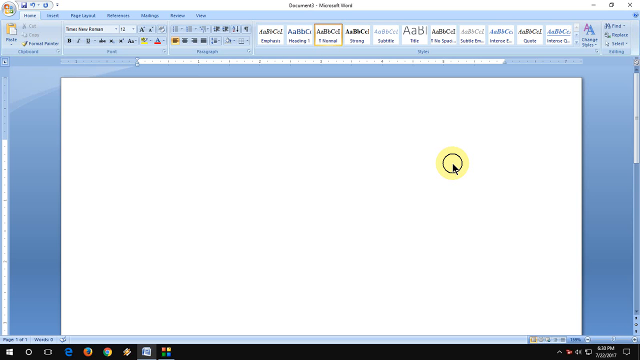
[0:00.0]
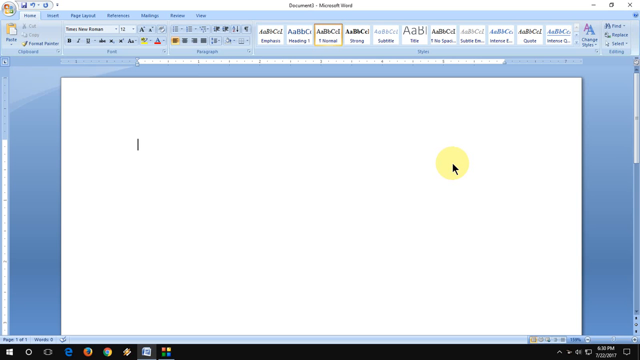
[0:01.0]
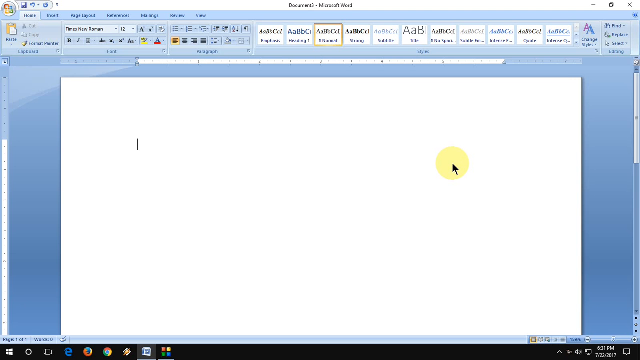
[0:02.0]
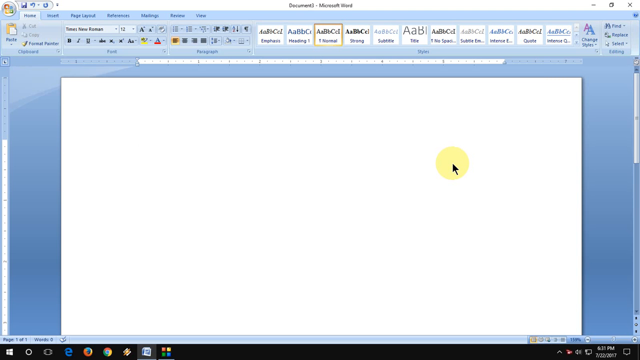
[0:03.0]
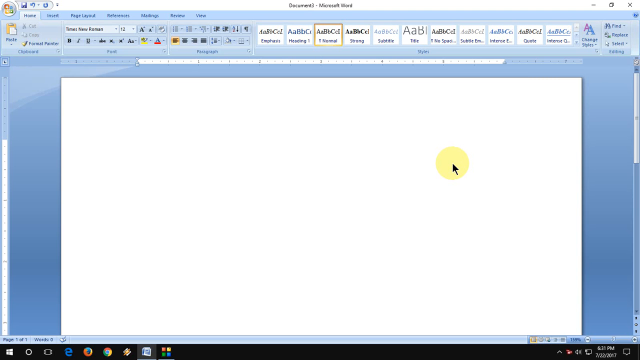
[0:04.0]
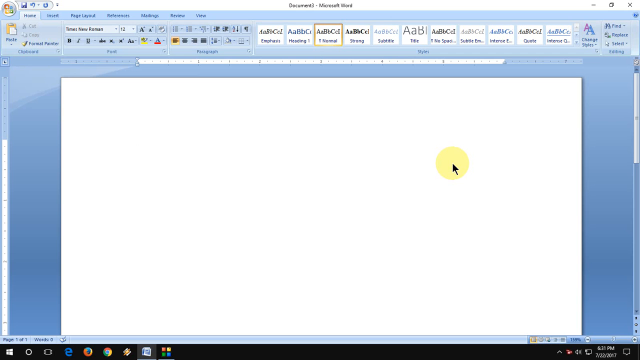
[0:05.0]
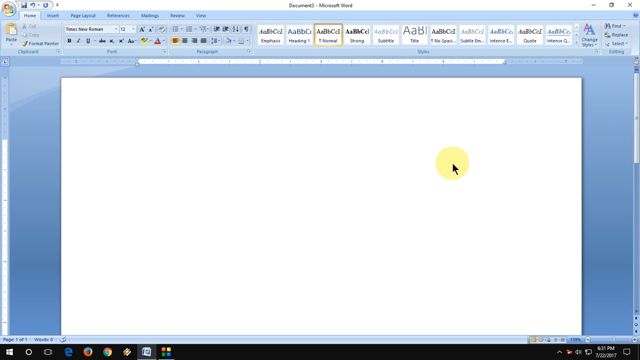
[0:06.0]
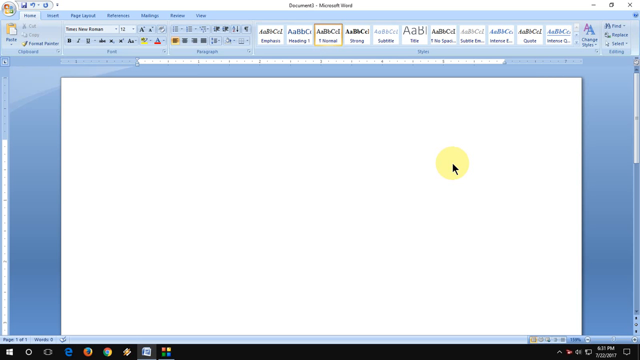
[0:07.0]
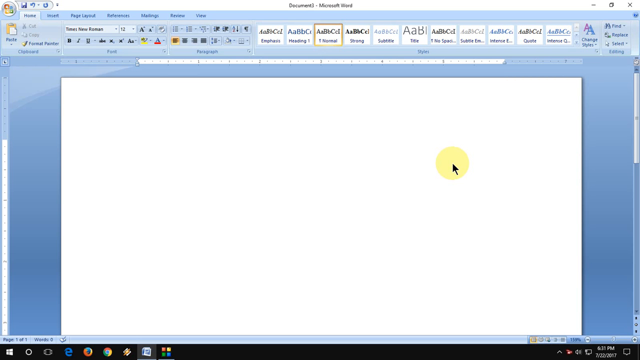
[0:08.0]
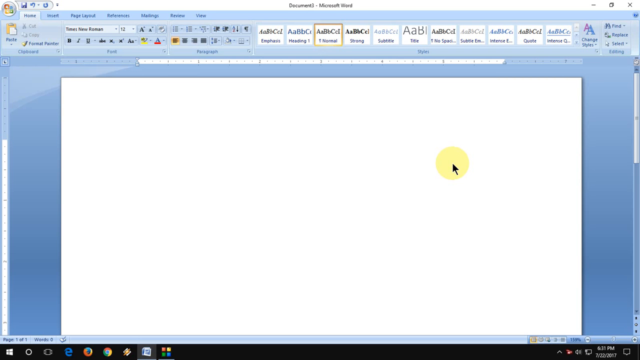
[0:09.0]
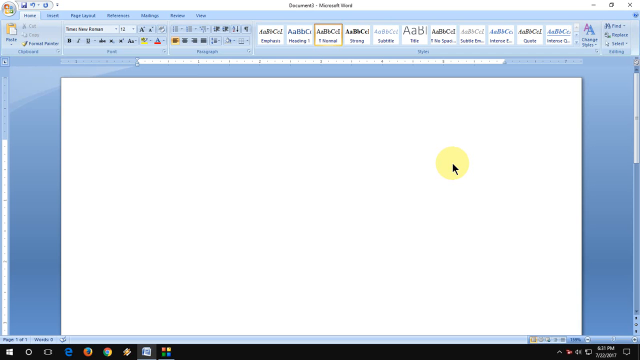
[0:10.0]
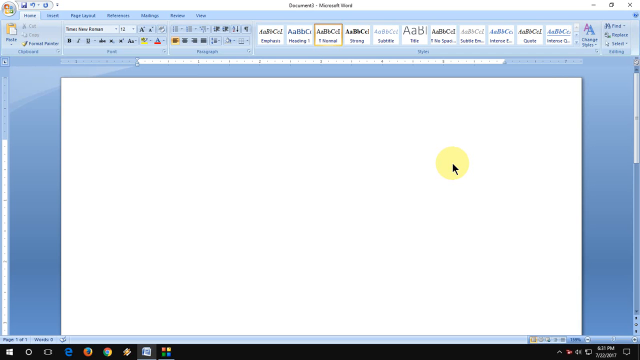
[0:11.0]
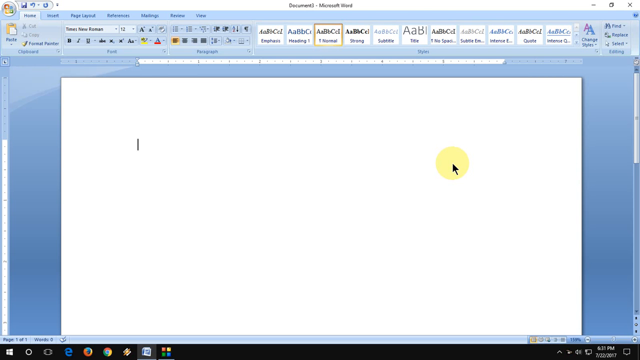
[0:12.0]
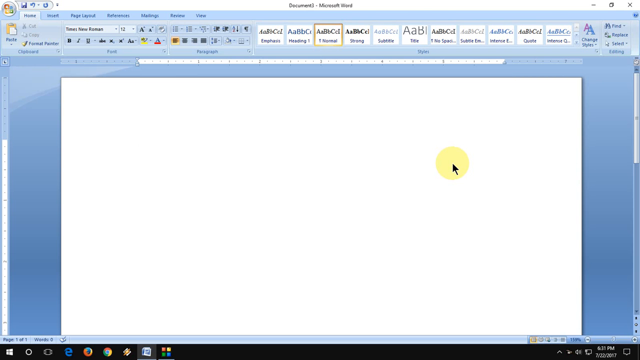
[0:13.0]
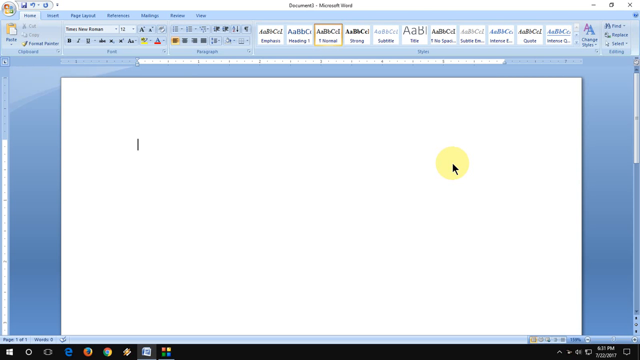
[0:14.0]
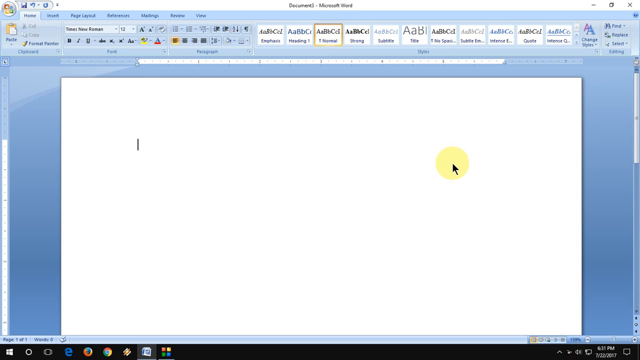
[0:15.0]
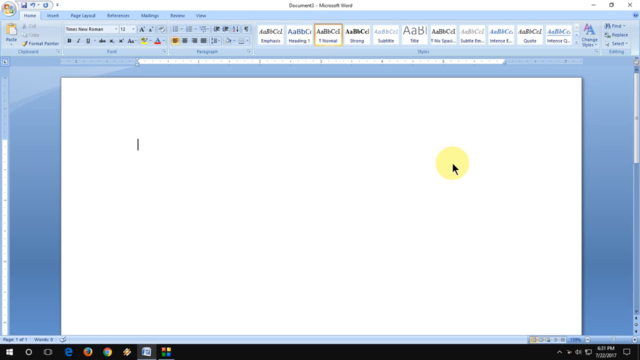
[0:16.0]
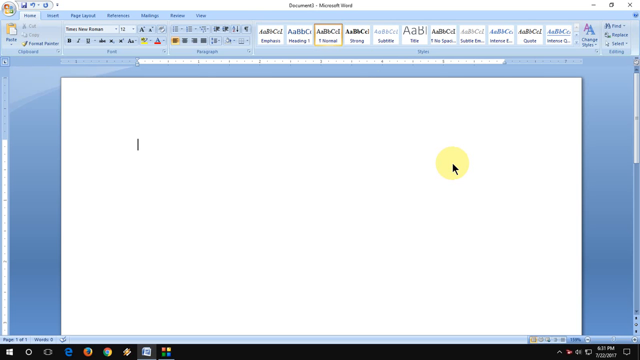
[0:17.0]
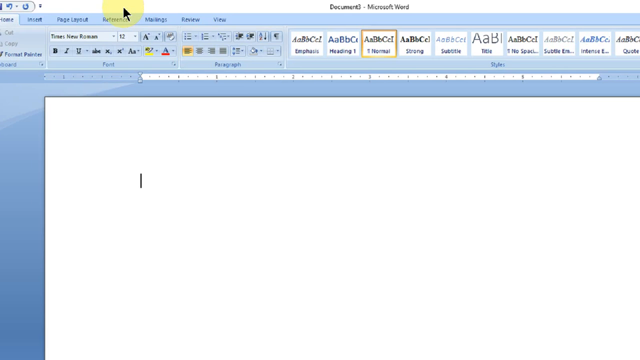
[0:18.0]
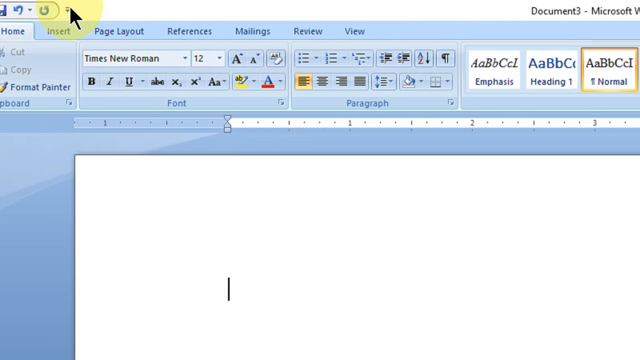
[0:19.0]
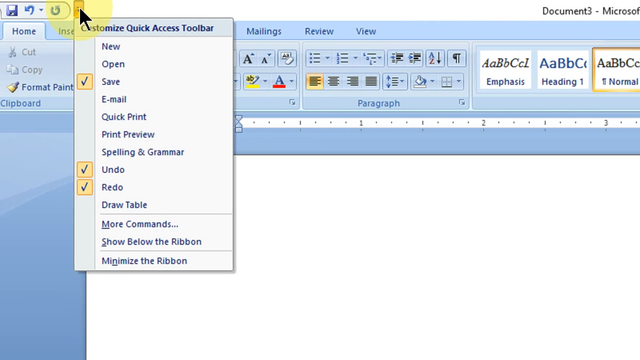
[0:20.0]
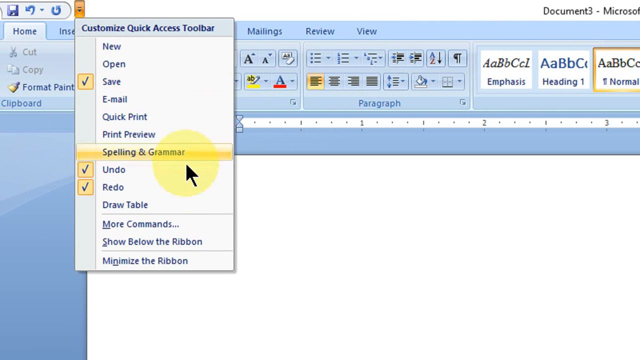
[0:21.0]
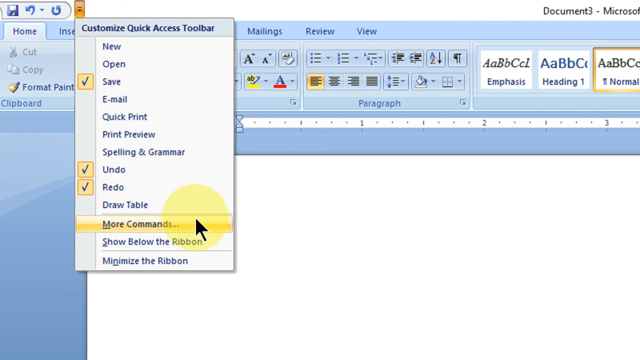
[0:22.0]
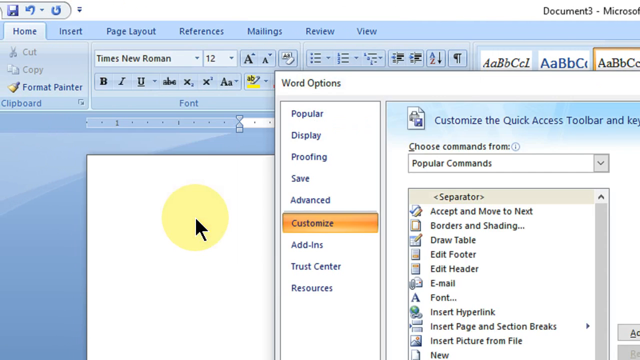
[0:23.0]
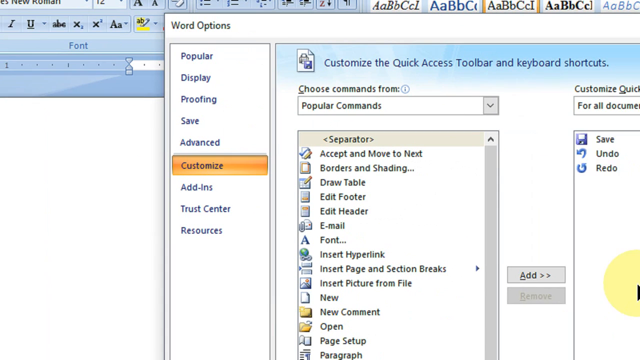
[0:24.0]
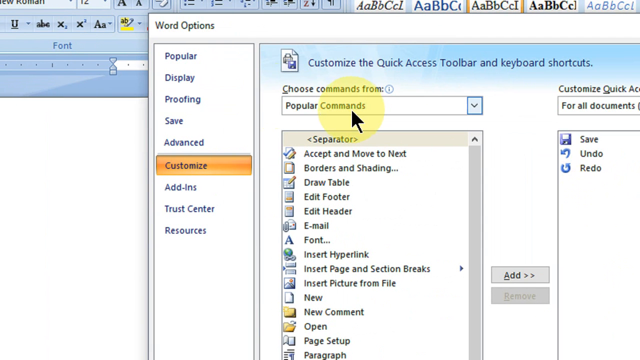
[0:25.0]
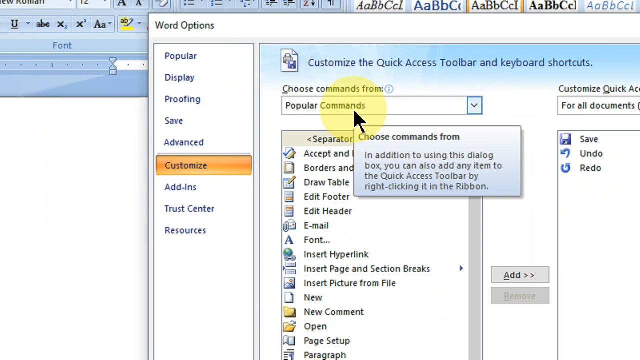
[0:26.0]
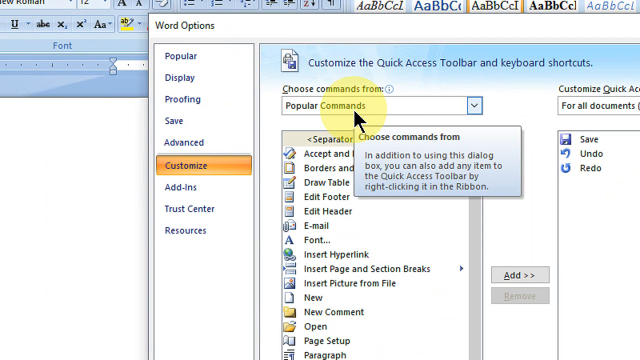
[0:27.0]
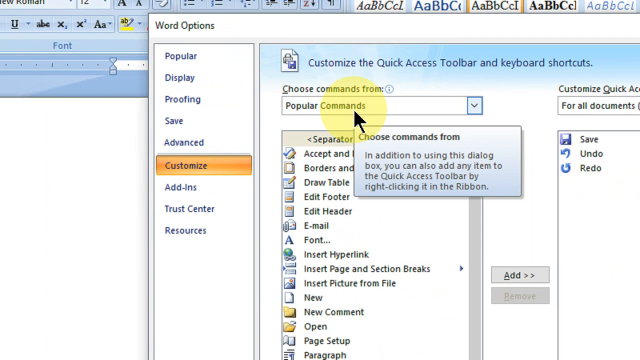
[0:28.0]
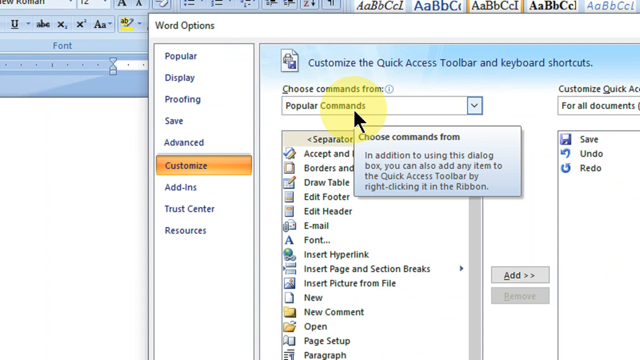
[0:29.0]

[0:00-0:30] The video shows Microsoft Office, with a white page and the mouse cursor highlighted by a yellow sphere around it. The Home tab is selected, the font size is set to 12, the font type to Times New Roman, and the font color to black. The page zooms in to show where the cursor is going. The cursor clicks a button in the top left-hand corner of the screen, which opens a drop-down box with a variety of options. It clicks on More Commands, and a red sphere icon indicates the click. The Word Options dialog box is displayed, with the Customize tab selected. The cursor clicks on a drop-down box called Popular Commands, and while the cursor is over it, description text appears reading "Choose commands from. In addition to using this dialog box you can also add any items to the quick access toolbar by right clicking in the ribbon."